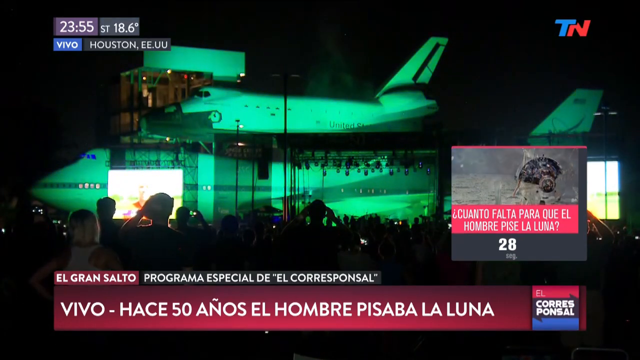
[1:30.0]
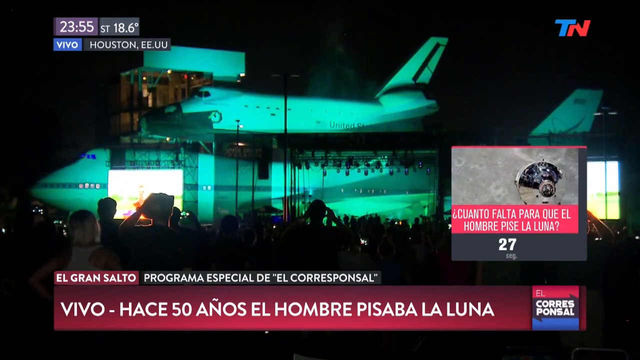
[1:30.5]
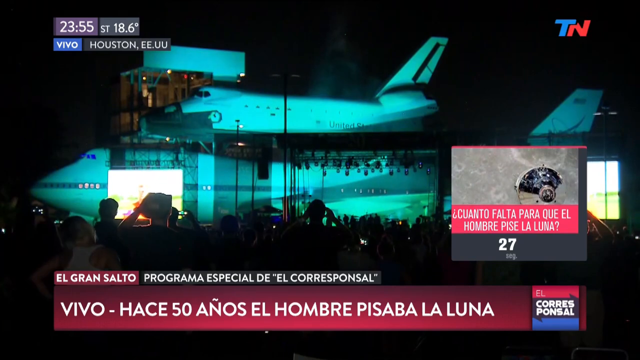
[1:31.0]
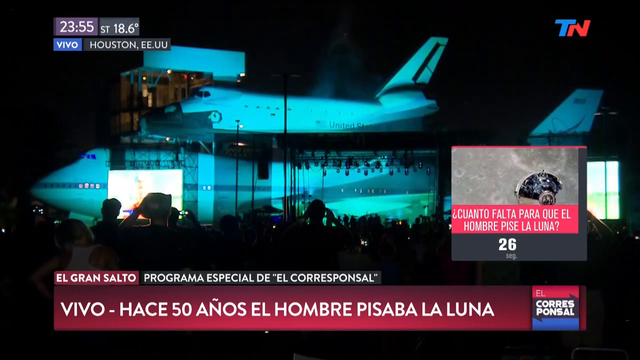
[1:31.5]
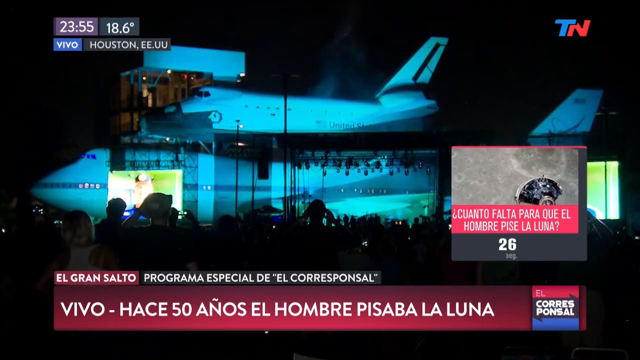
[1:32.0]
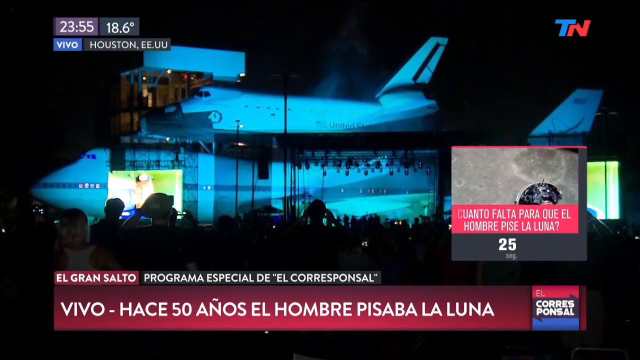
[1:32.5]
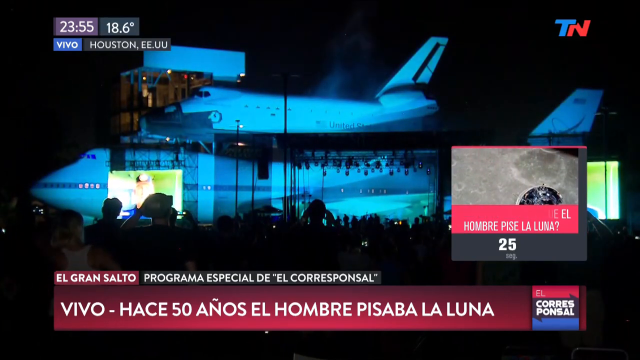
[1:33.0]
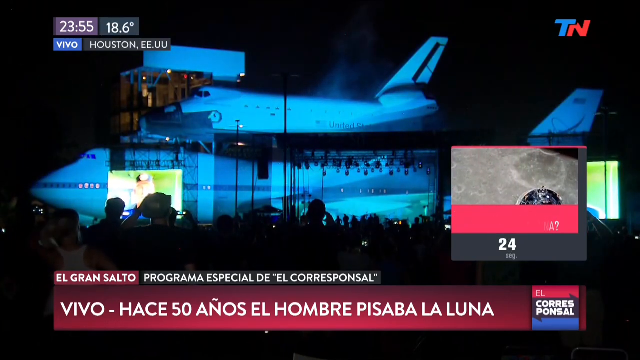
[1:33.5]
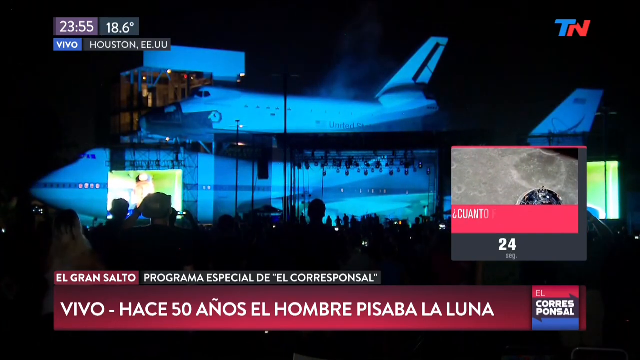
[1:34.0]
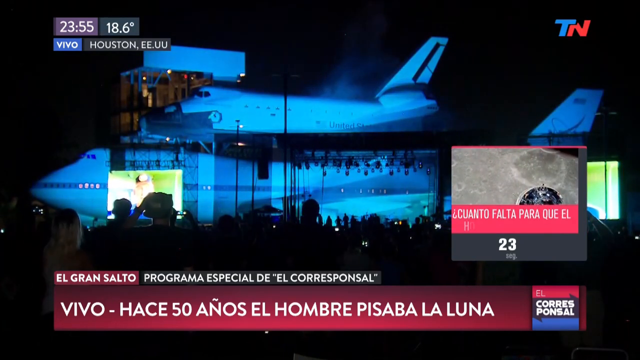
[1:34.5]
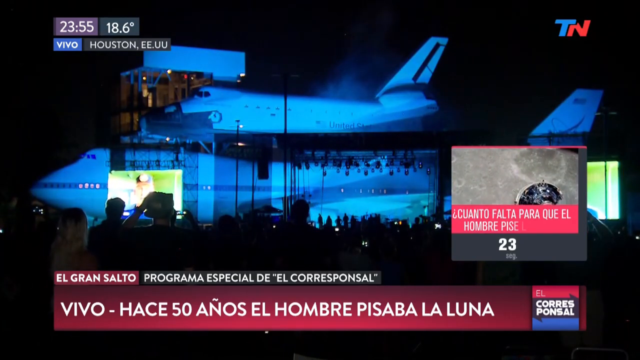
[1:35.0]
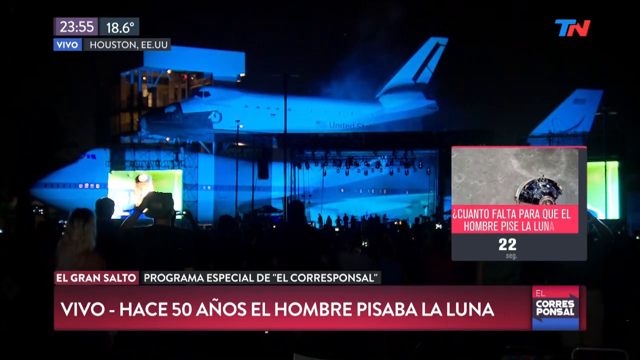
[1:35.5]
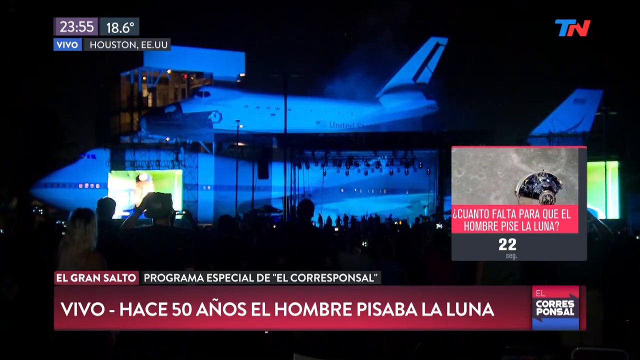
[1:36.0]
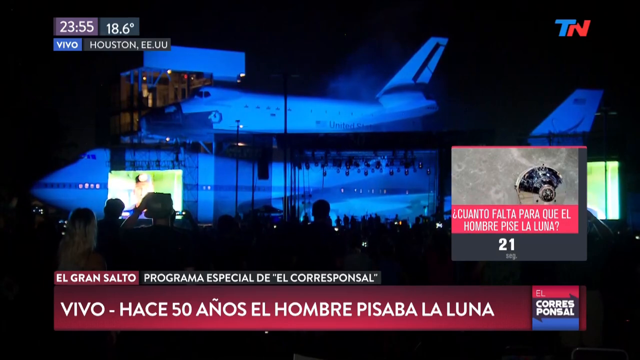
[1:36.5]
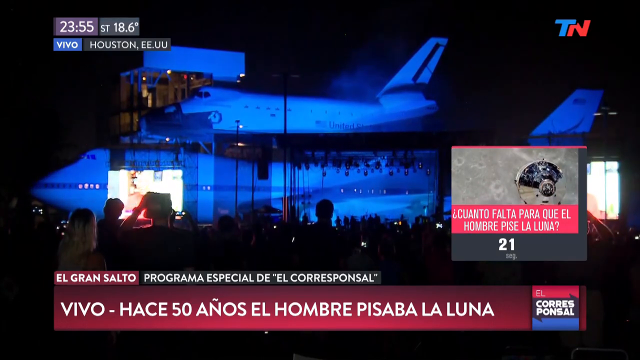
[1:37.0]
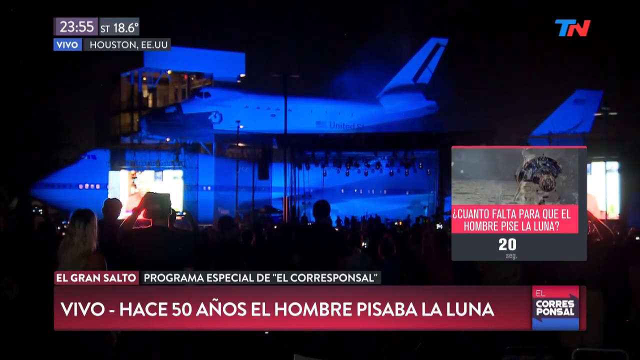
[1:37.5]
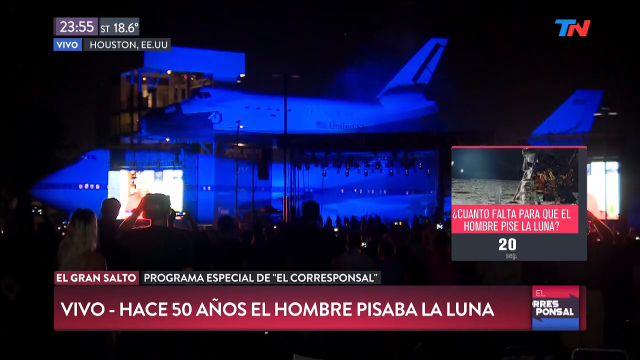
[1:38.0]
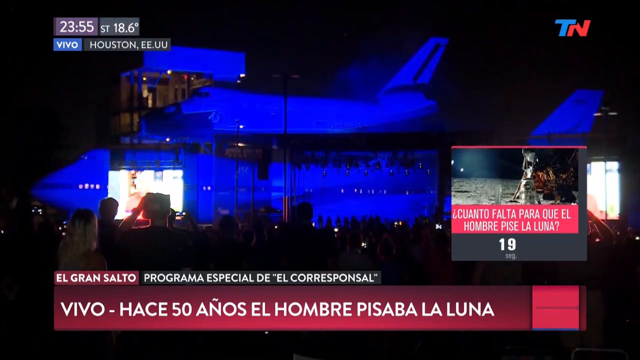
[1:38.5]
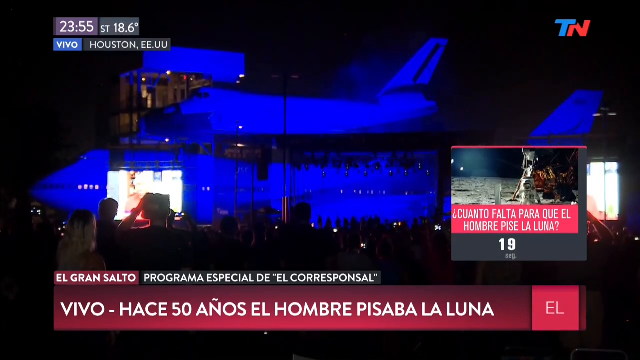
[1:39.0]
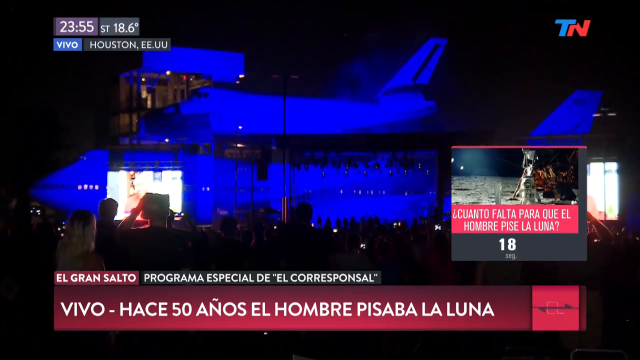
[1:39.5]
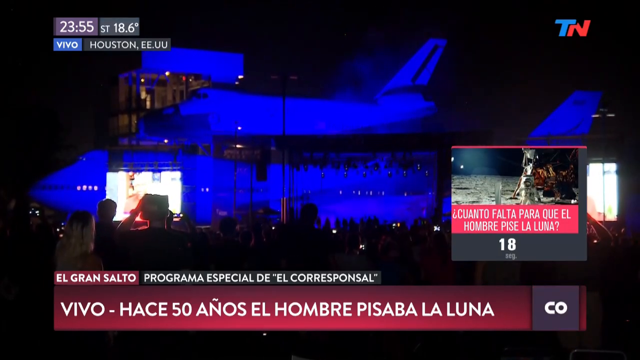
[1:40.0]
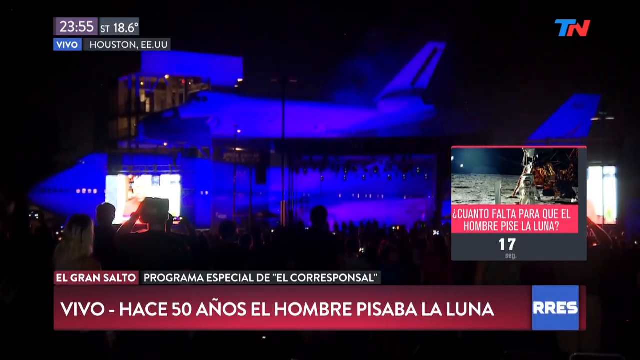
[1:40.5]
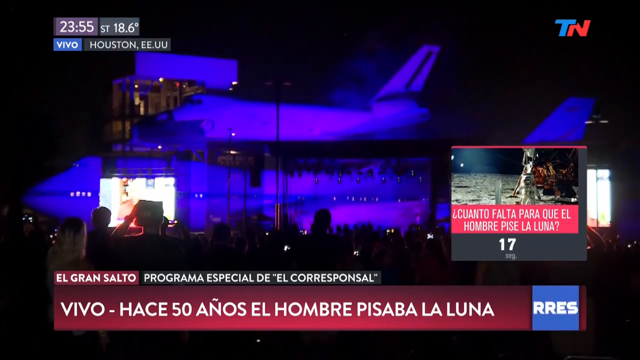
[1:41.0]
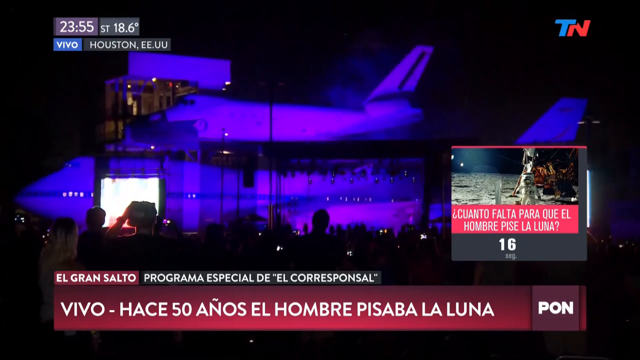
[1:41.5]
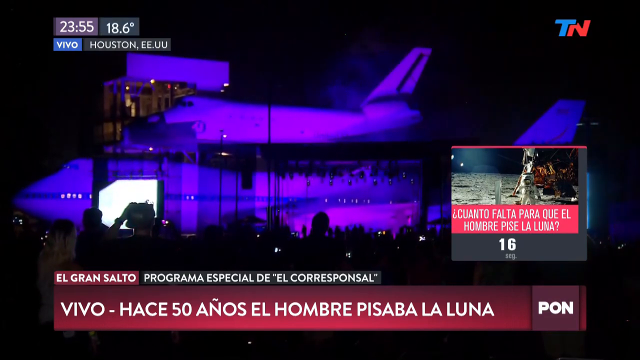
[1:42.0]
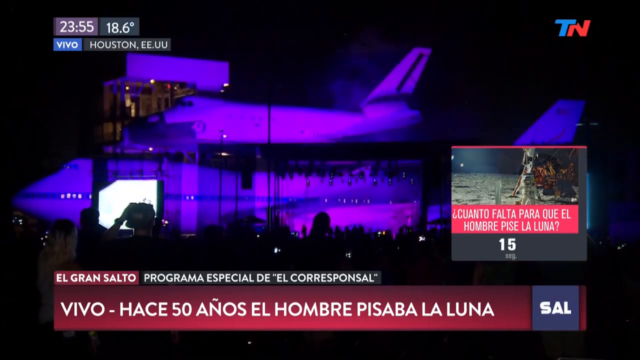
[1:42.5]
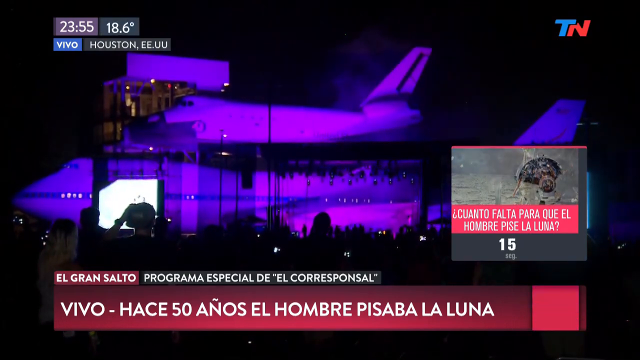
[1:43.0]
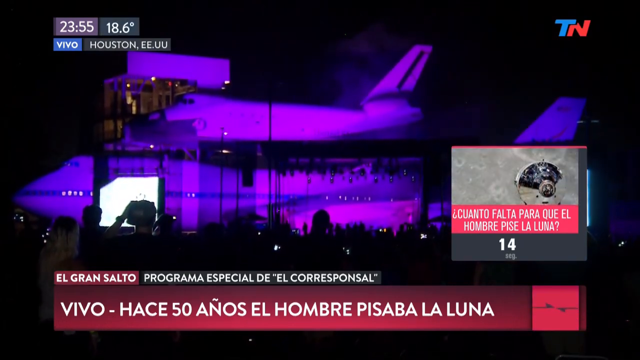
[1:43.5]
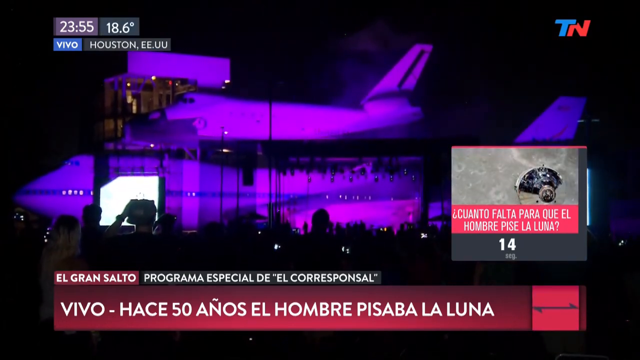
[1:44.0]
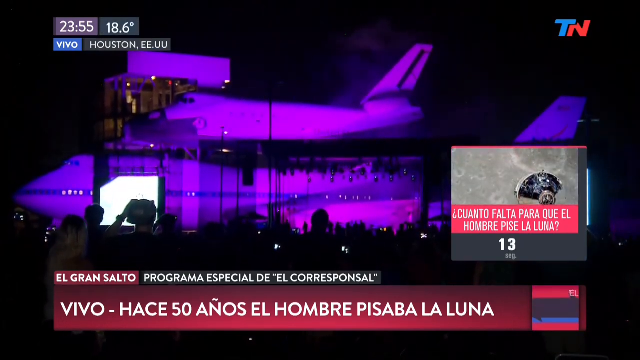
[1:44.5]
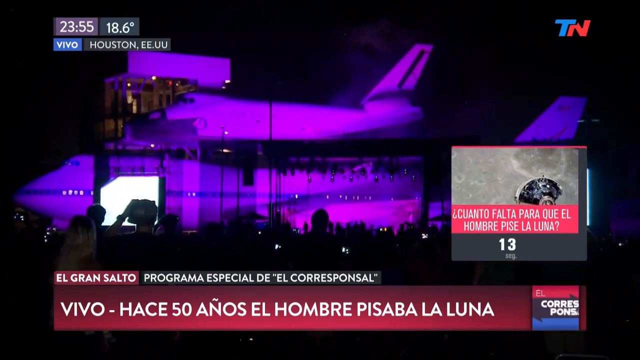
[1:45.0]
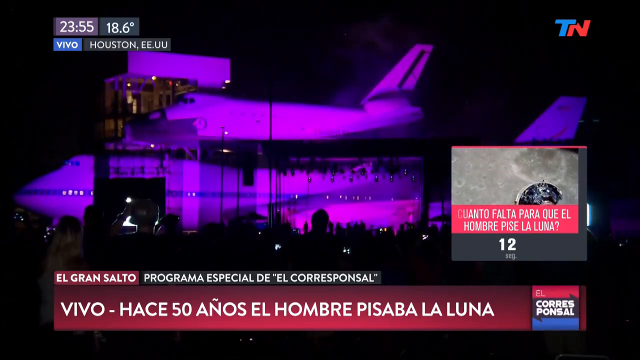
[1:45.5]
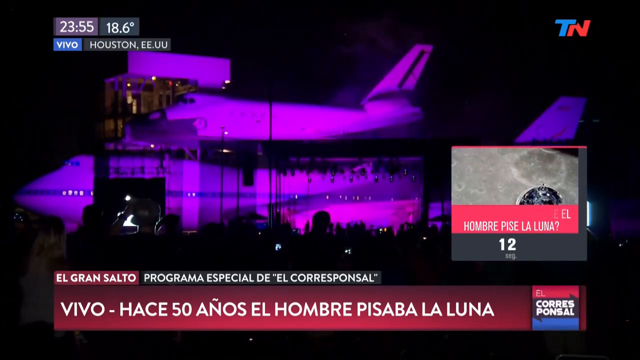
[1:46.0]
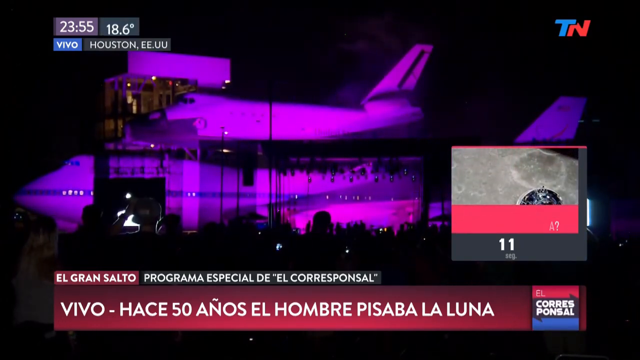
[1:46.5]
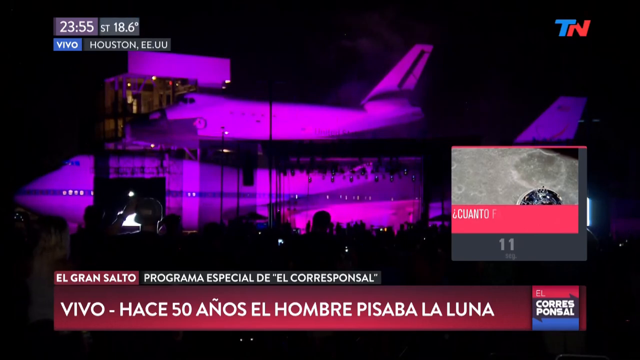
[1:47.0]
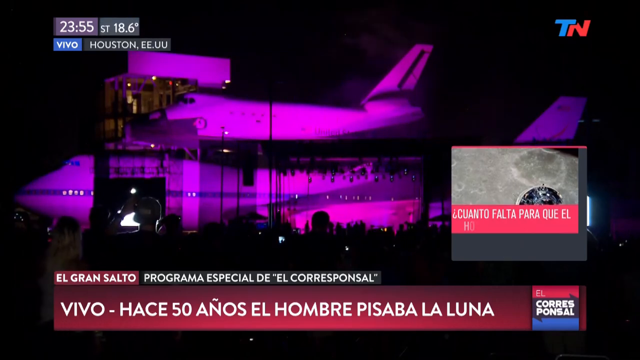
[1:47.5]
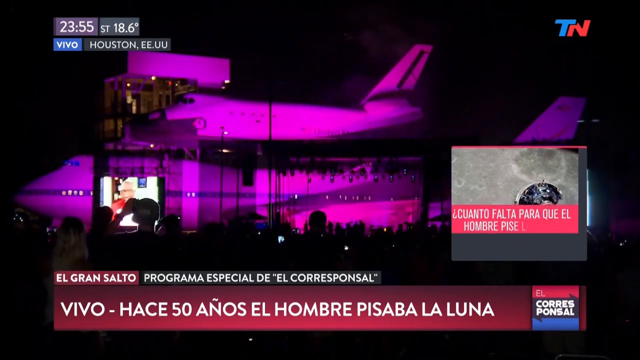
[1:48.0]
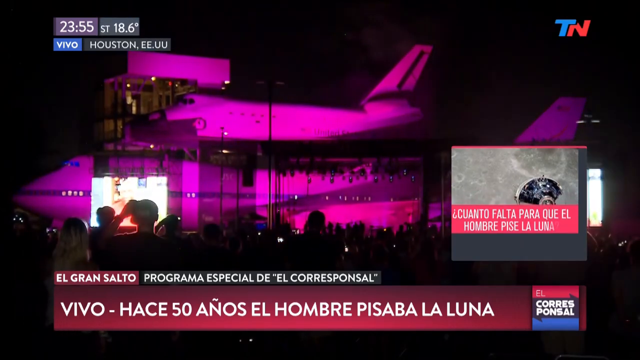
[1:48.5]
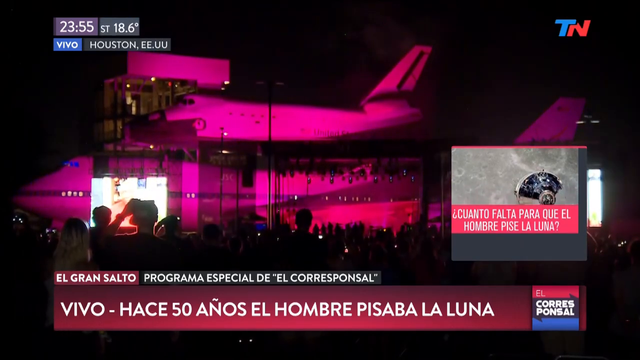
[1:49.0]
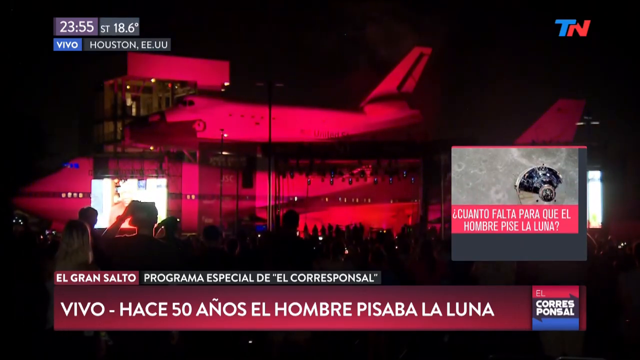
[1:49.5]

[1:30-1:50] The plane is still shown, still glowing. The timer is down to 22 seconds, and everybody has their phones up. Then the timer drops to 10 seconds, and more phones go up as people hold their cameras up high.